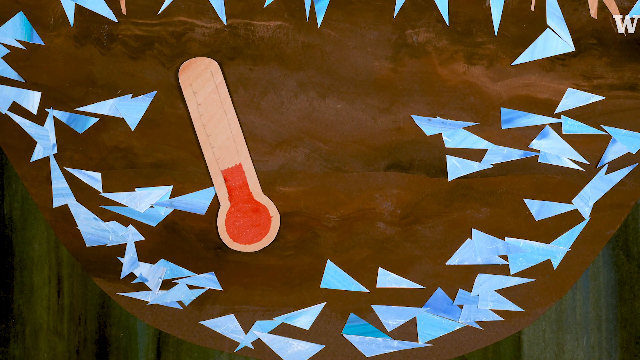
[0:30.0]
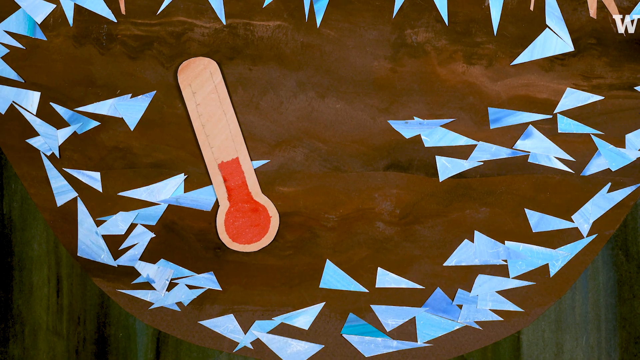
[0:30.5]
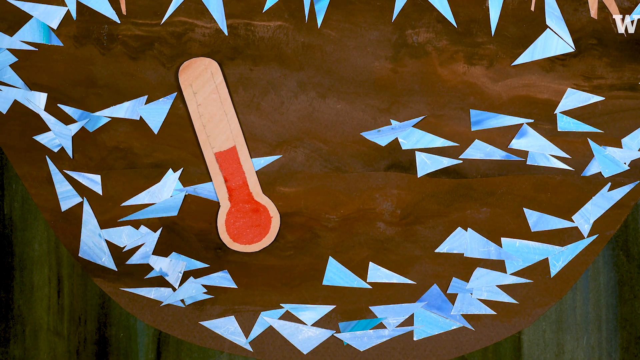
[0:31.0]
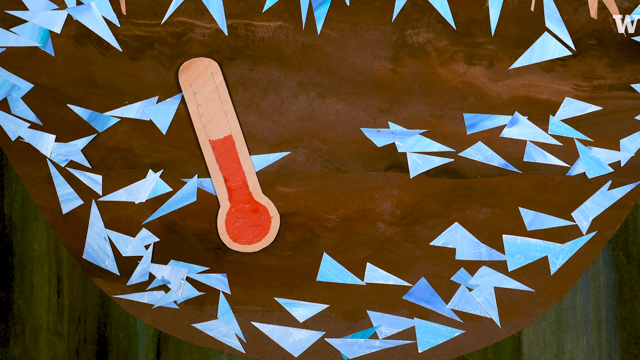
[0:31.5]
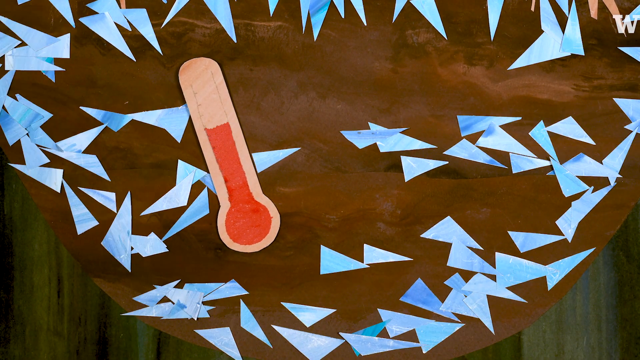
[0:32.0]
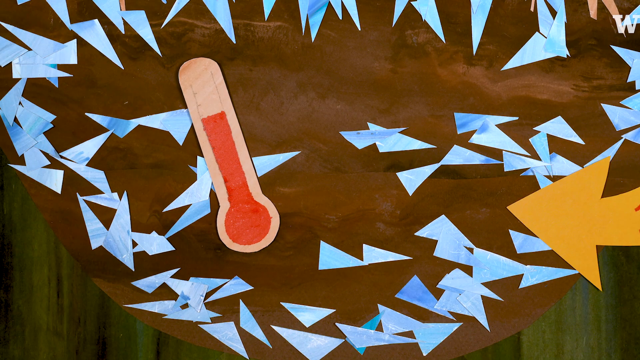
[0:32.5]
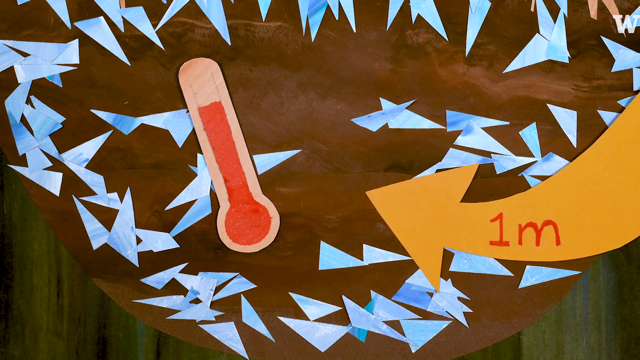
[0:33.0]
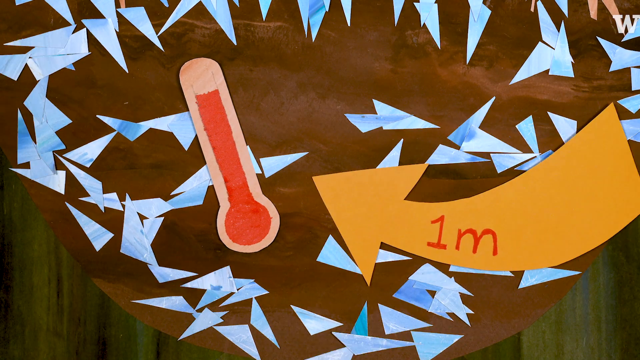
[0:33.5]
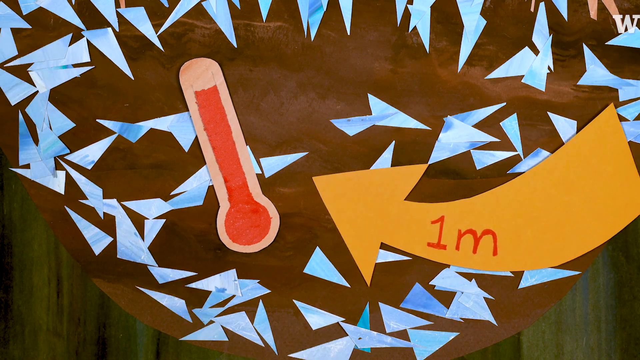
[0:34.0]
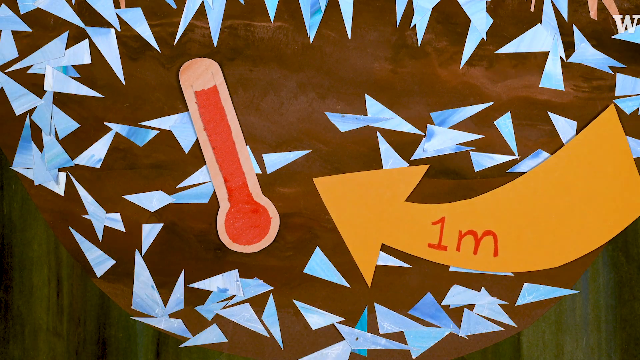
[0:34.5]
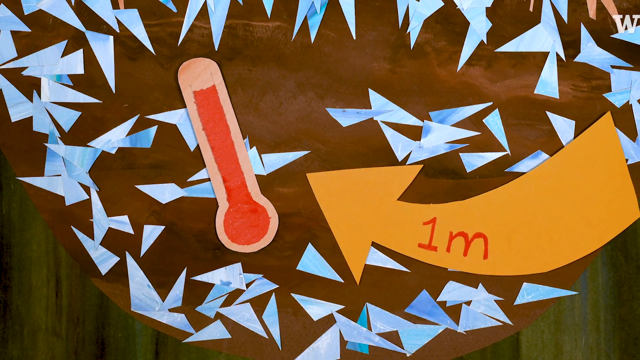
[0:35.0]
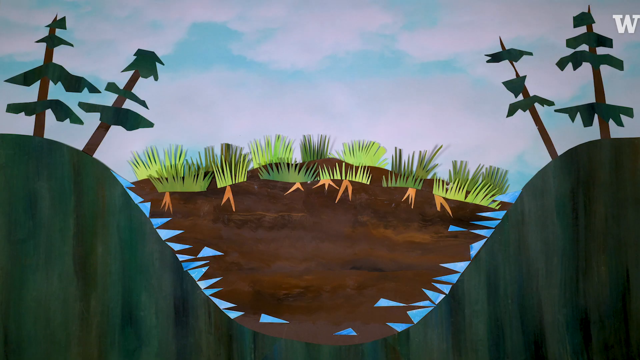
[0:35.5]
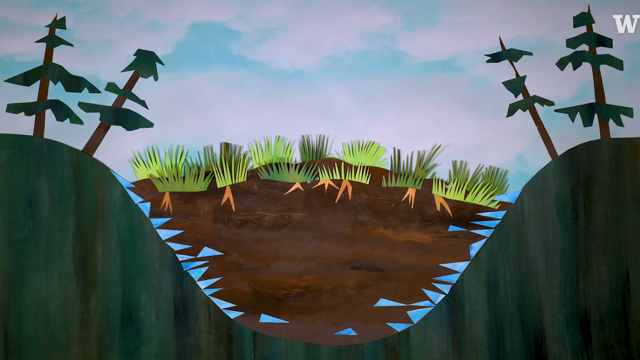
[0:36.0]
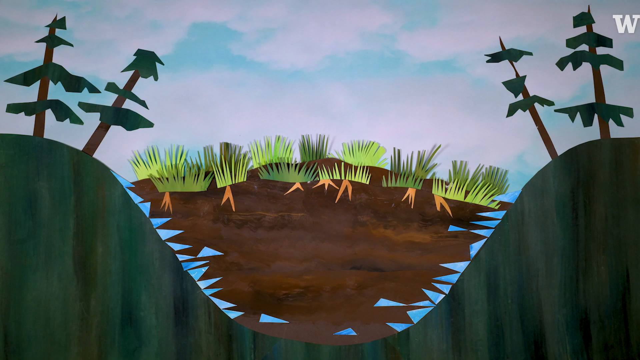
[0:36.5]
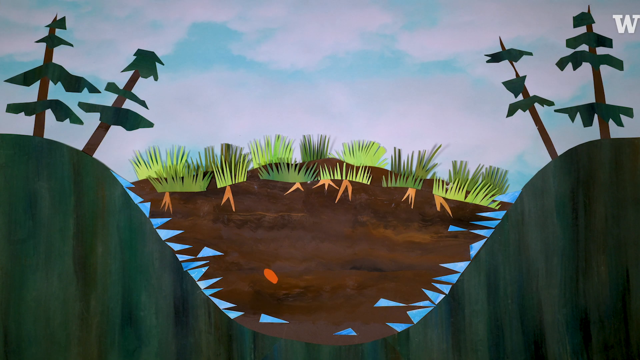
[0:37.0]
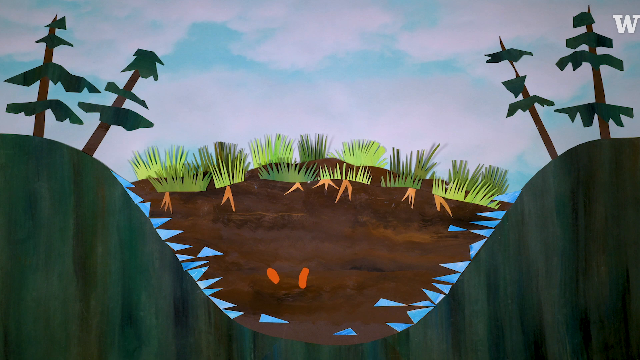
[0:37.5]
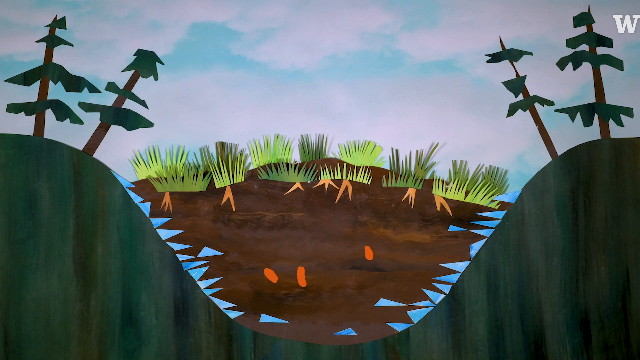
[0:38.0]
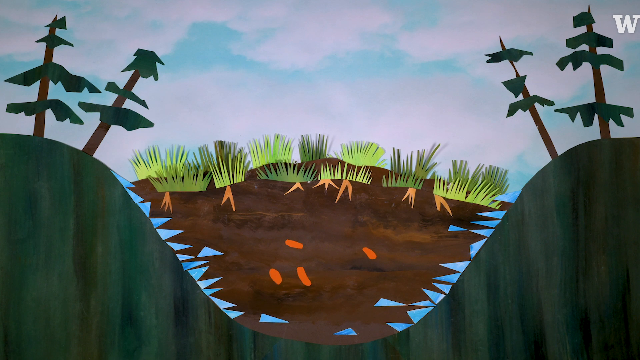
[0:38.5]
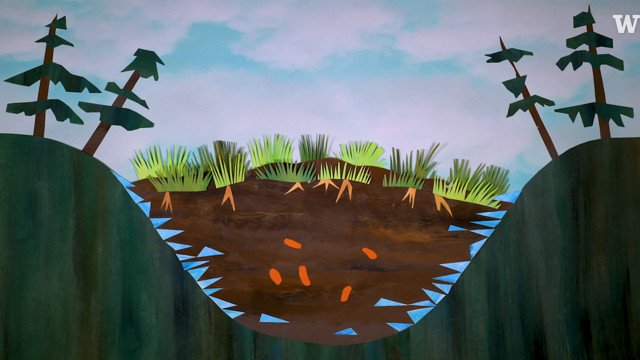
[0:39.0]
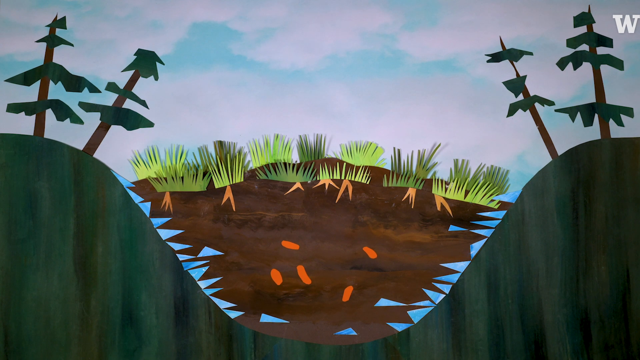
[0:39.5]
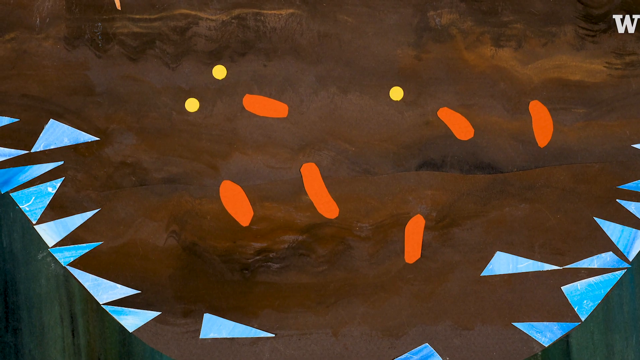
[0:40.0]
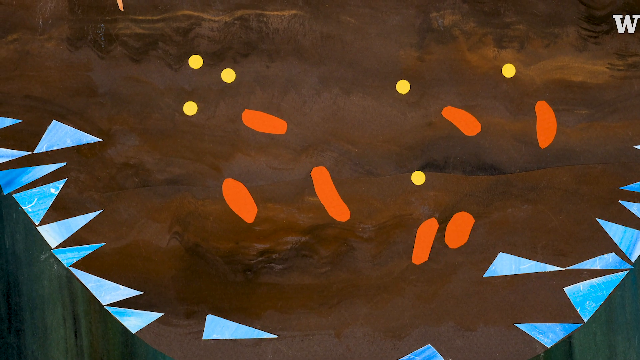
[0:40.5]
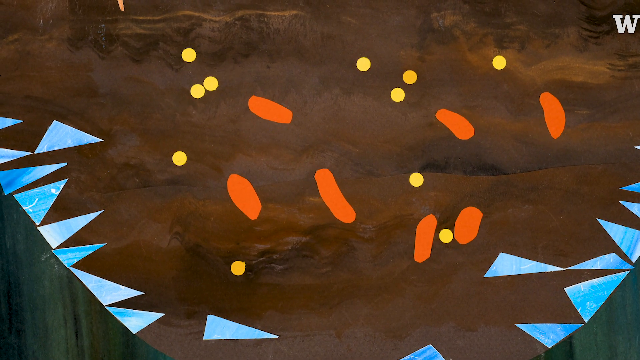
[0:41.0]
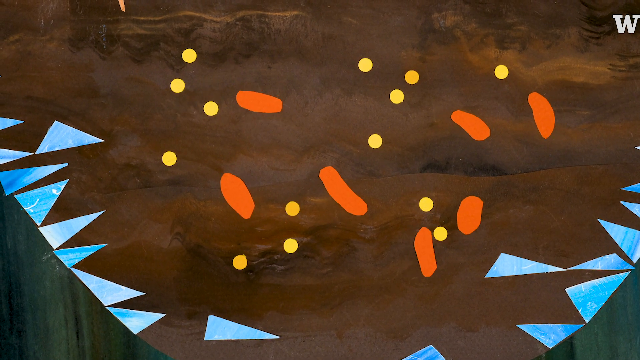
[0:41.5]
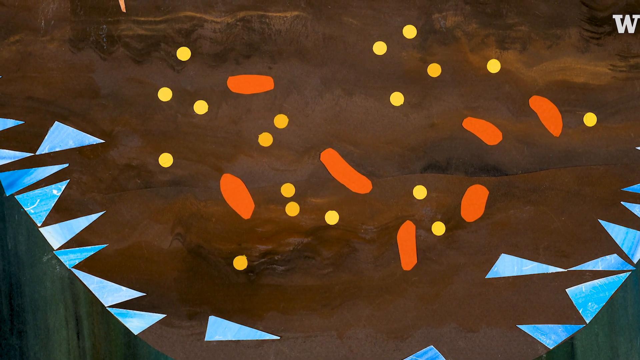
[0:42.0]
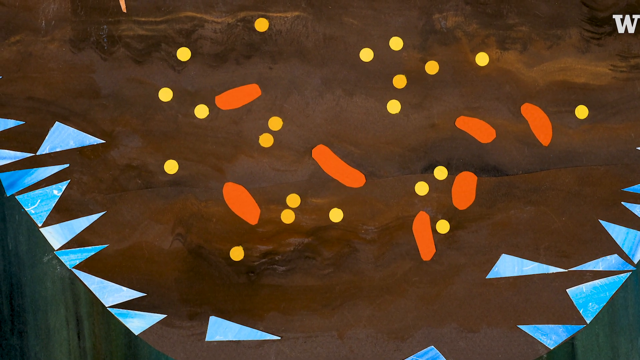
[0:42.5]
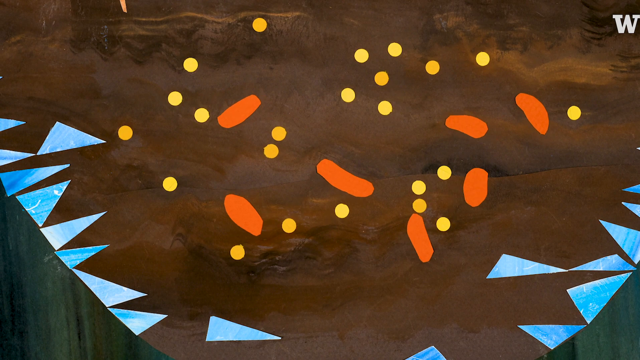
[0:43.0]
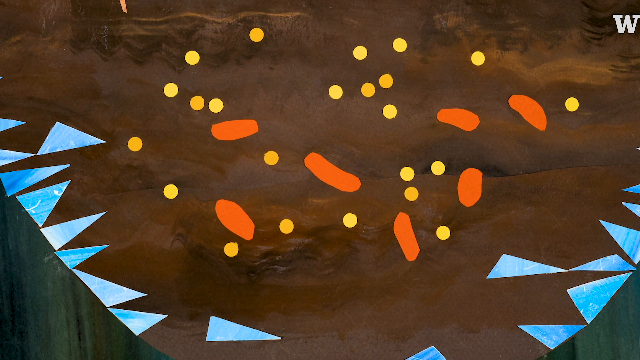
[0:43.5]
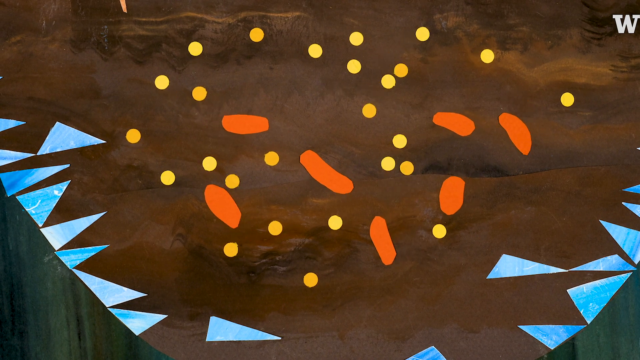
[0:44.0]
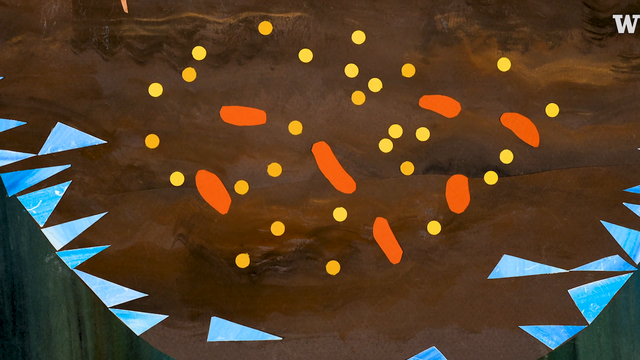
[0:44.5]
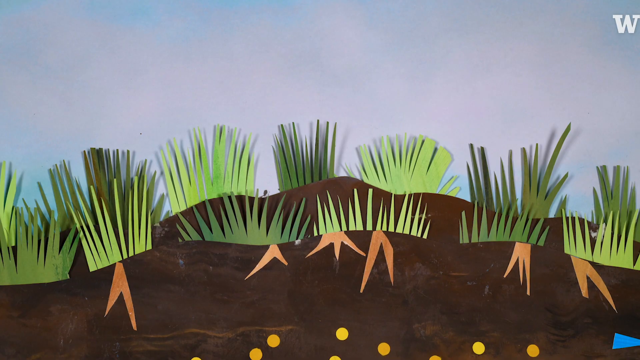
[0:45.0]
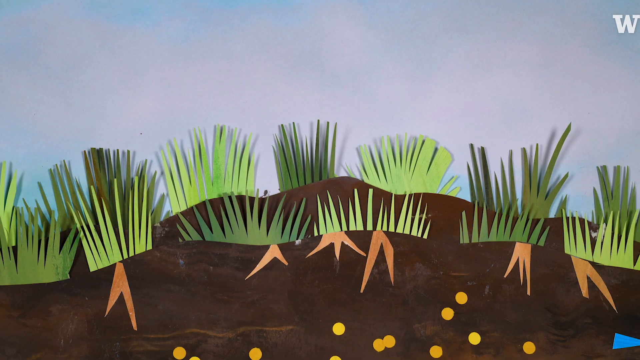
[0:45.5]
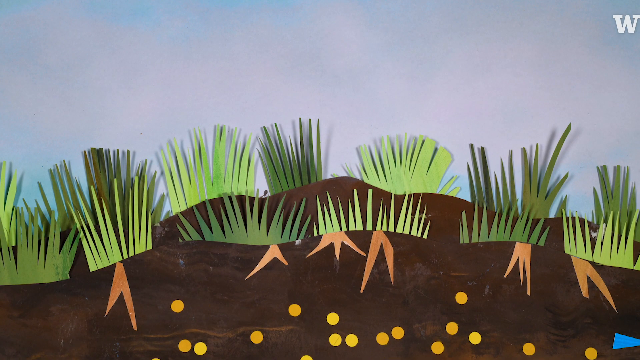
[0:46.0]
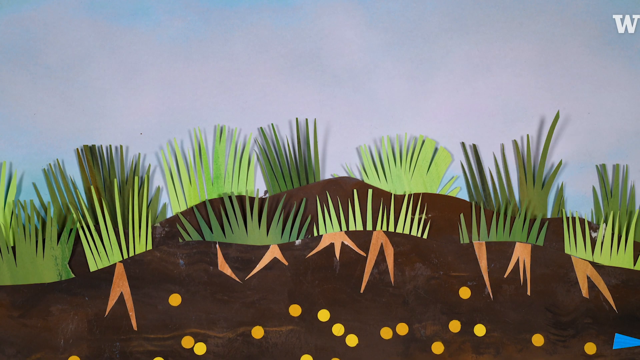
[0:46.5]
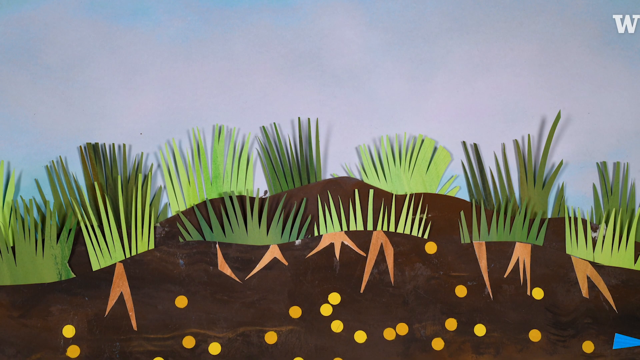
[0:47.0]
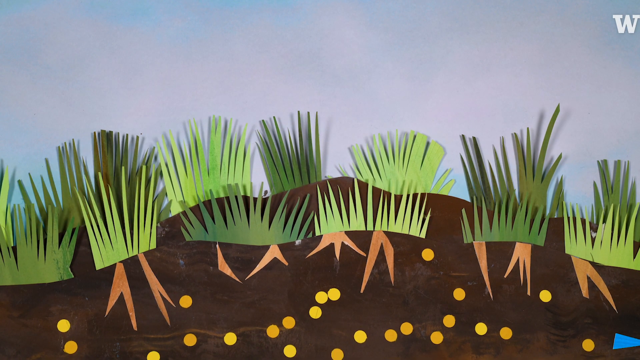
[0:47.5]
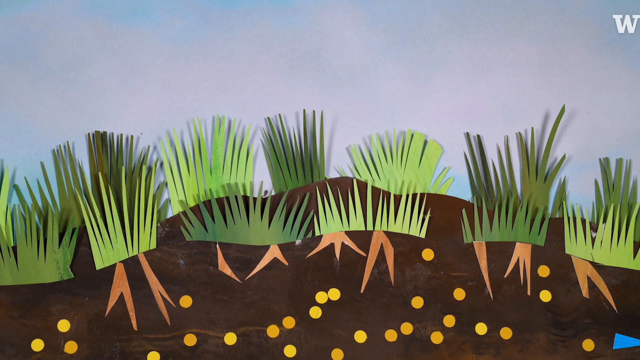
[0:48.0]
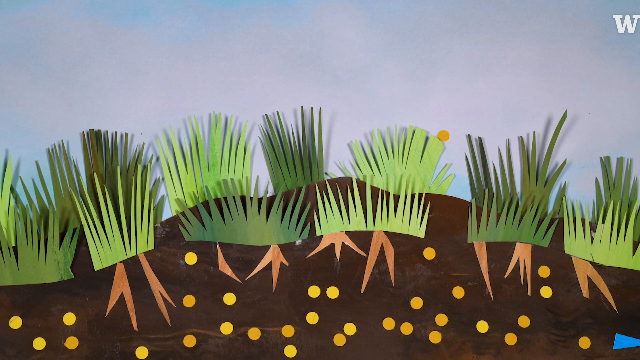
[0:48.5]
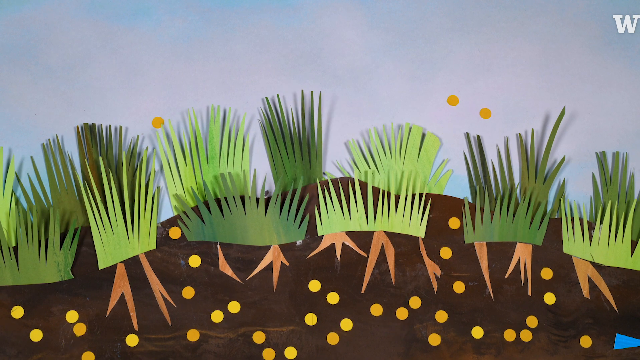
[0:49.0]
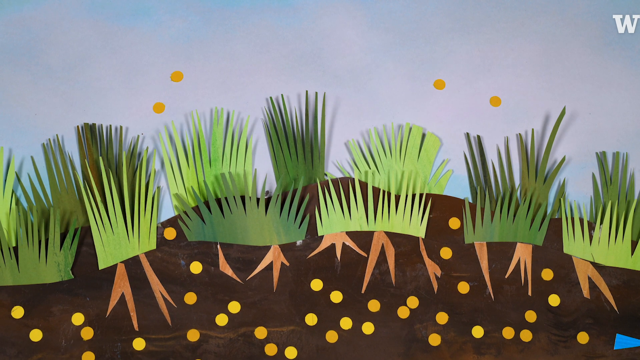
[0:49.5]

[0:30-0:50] The rain keeps falling, and the water continues to collect in a big hole. A yellow piece of equipment is there, possibly a canister or a device for measuring soil humidity. As more water collects, the readings on the equipment increase. An arrow shows "1m". Seedlings are then thrown onto the soil, and afterward they are shown growing up out of it.